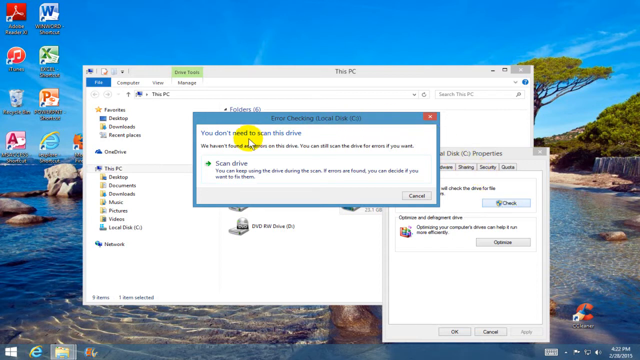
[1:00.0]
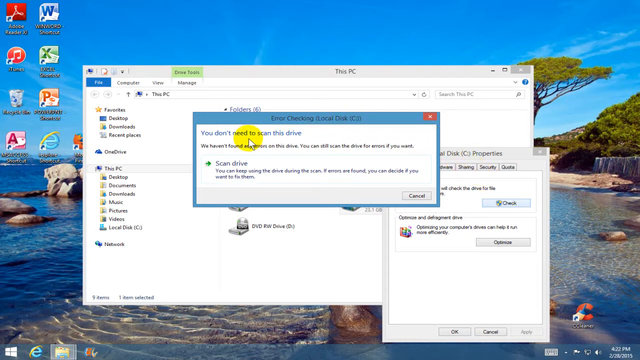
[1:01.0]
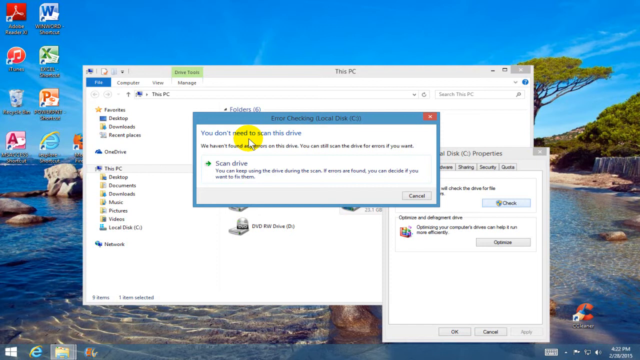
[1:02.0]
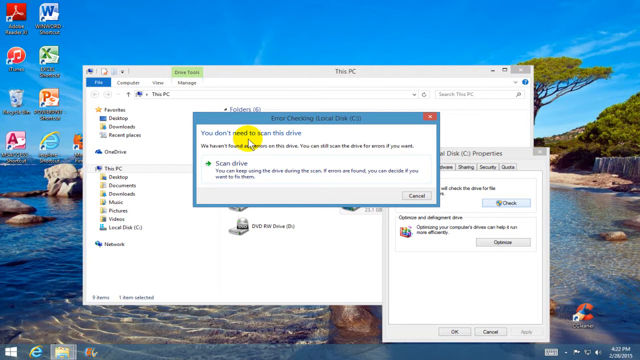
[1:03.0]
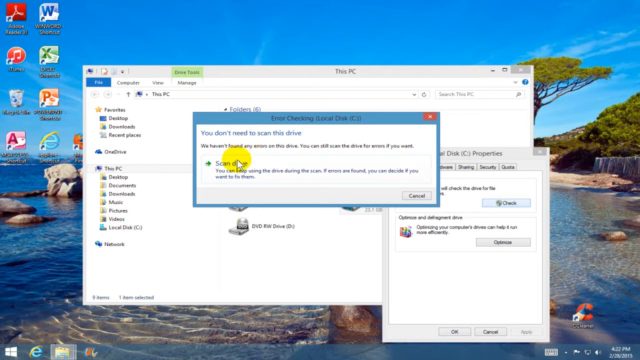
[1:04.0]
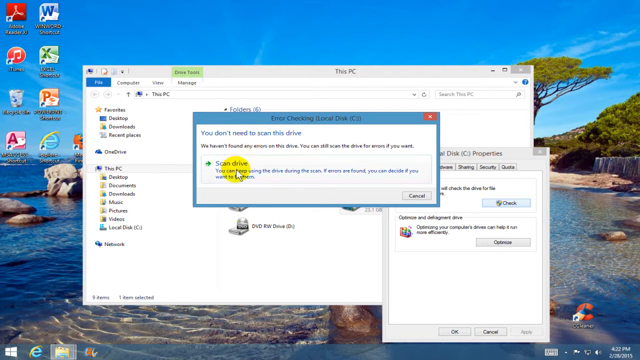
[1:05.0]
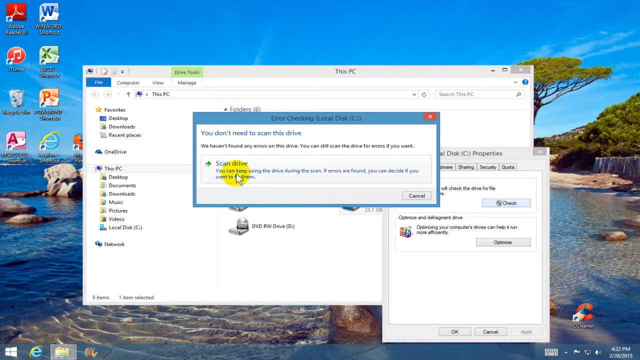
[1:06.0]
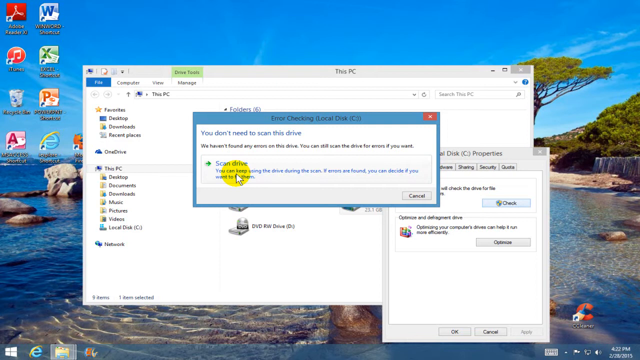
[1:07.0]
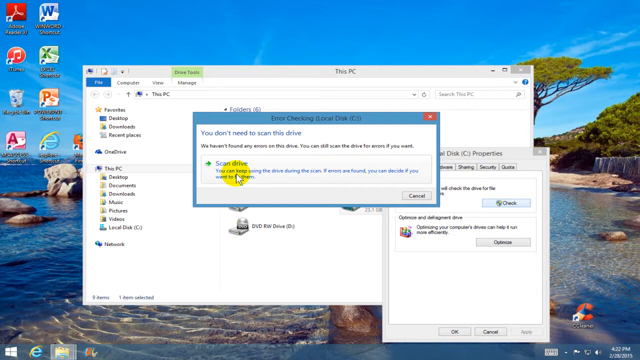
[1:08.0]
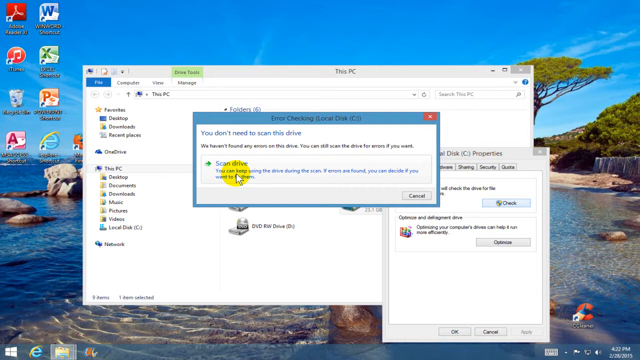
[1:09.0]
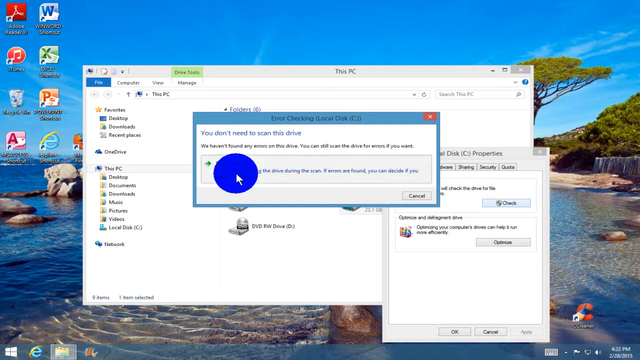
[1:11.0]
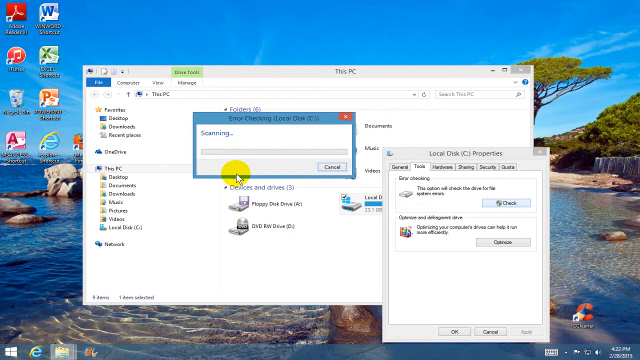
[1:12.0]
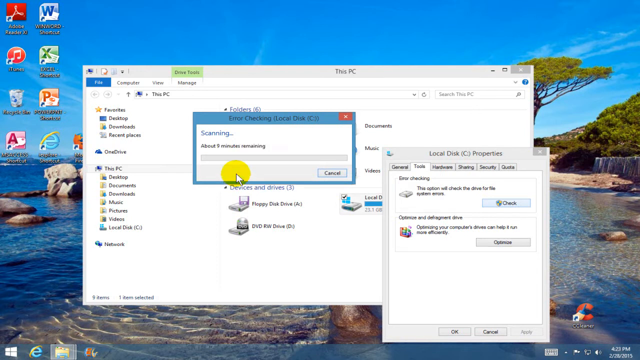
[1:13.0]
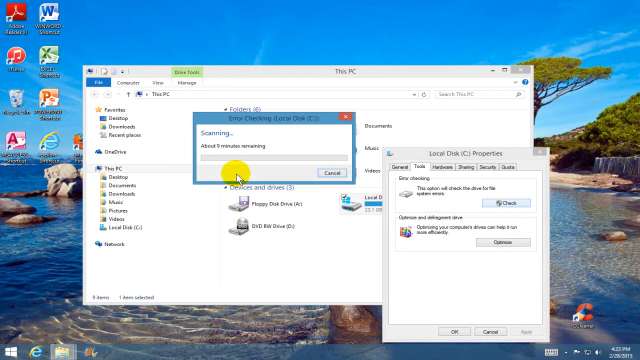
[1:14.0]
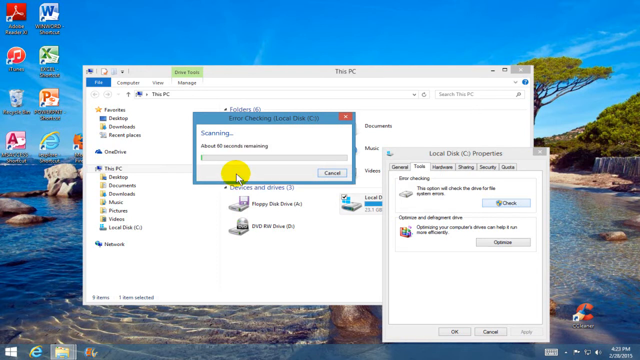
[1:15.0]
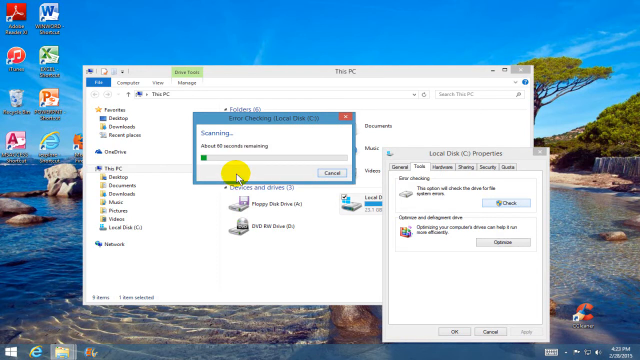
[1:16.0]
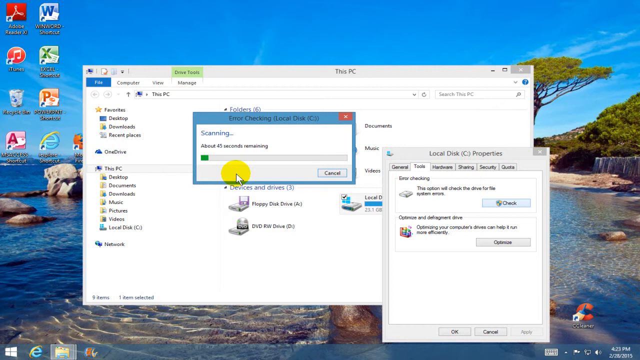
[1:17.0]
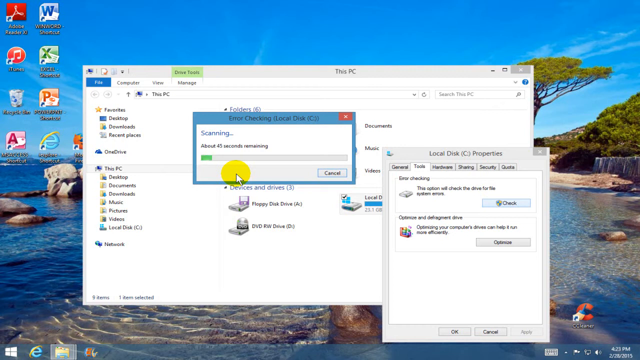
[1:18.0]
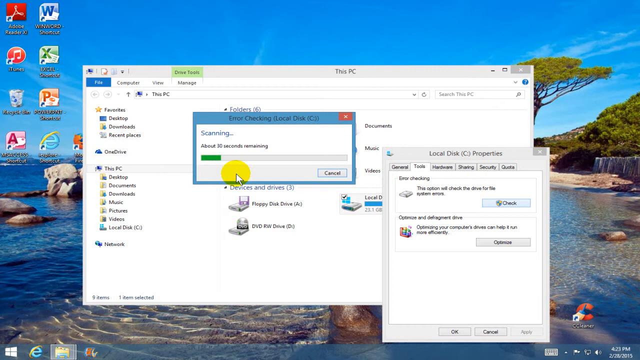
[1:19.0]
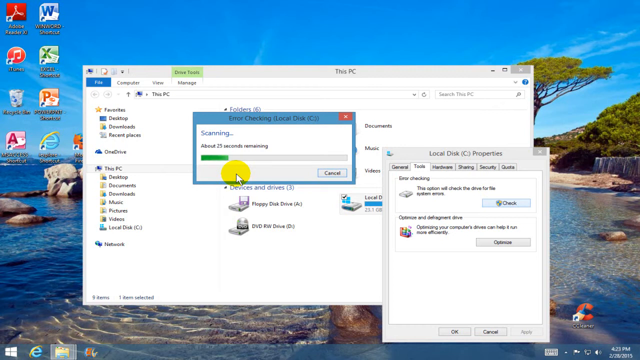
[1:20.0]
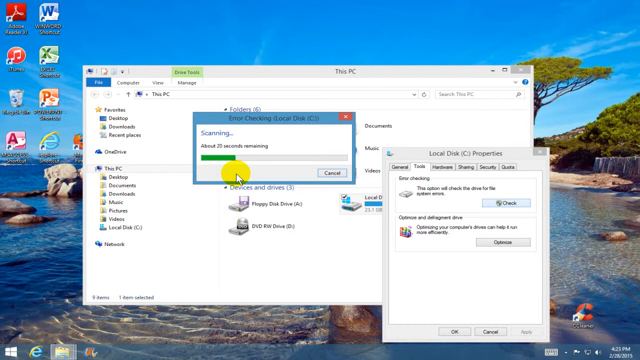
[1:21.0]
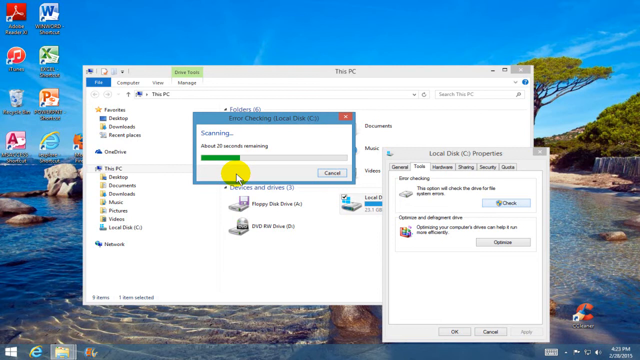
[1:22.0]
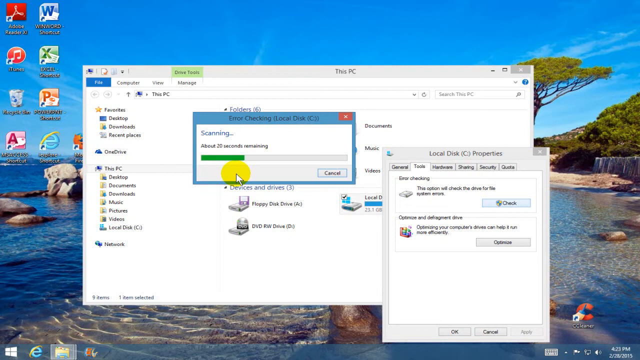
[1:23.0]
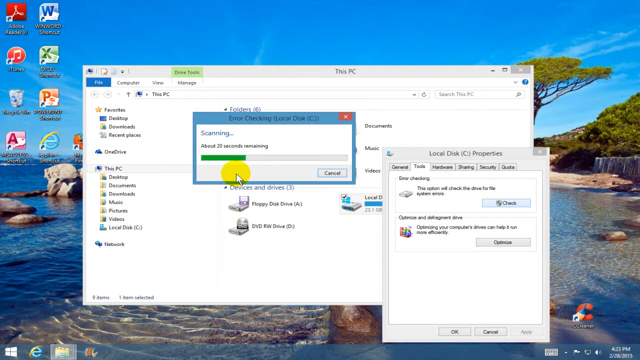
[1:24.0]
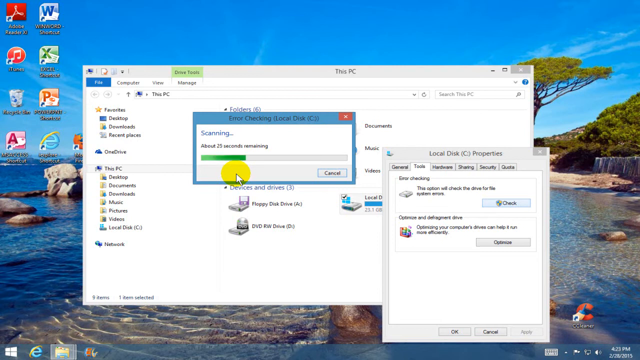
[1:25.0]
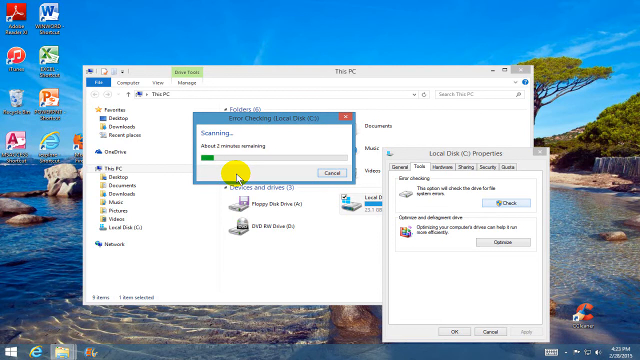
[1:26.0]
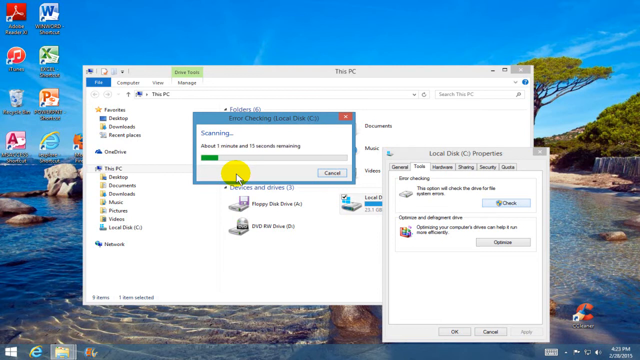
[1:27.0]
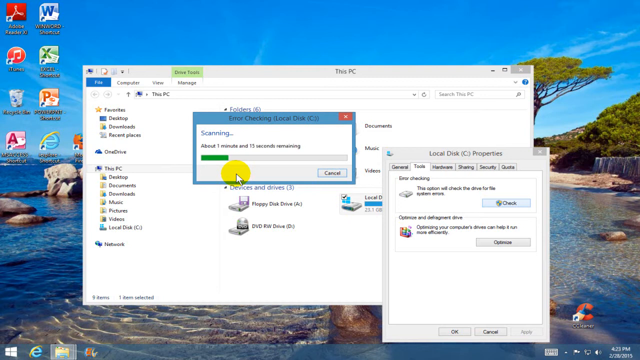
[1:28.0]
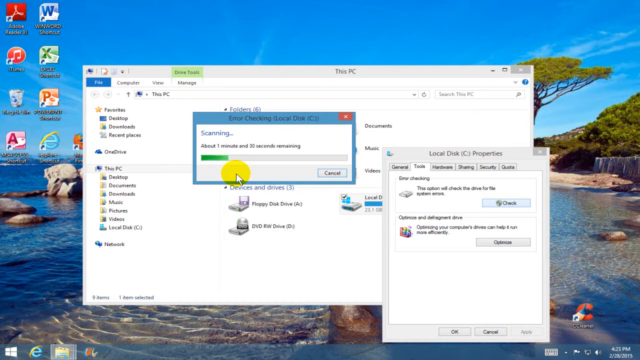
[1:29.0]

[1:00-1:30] Having used the menus of the Windows 8.1 operating system to reach the error-checking option, the user has the mouse pointer over the Scan Drive button and clicks it. A new window appears with the title "Scanning". It shows how long the scan has been running and how long remains until it is done. The remaining time appears to eventually switch to at least an hour for the entire scan.